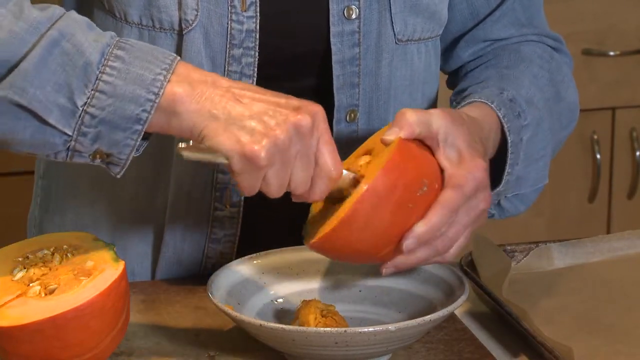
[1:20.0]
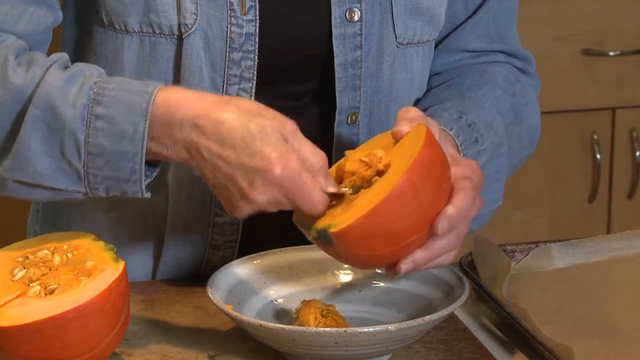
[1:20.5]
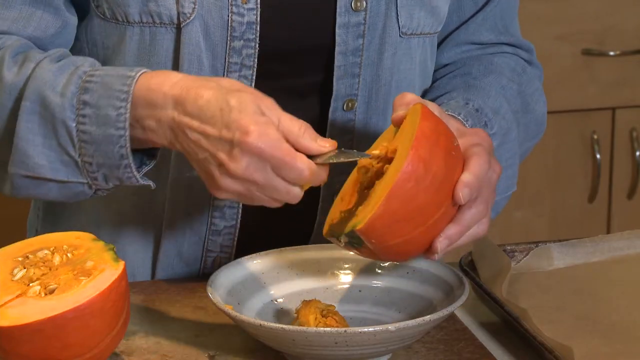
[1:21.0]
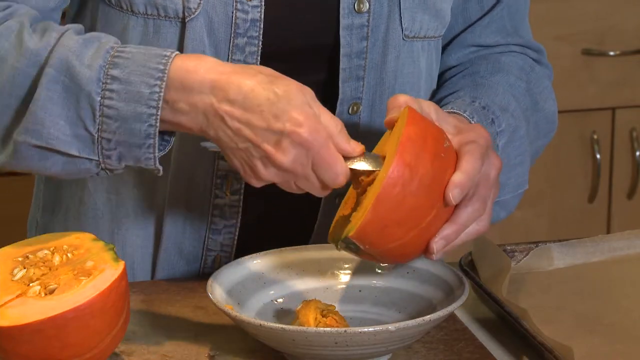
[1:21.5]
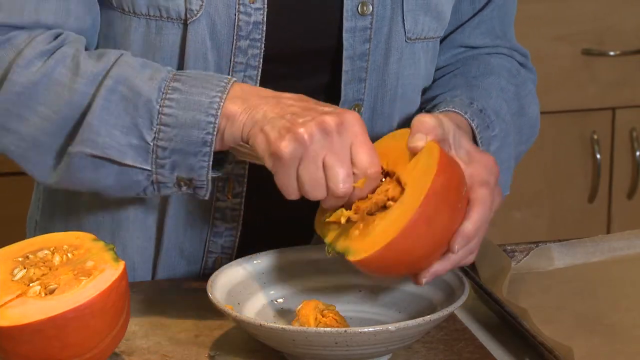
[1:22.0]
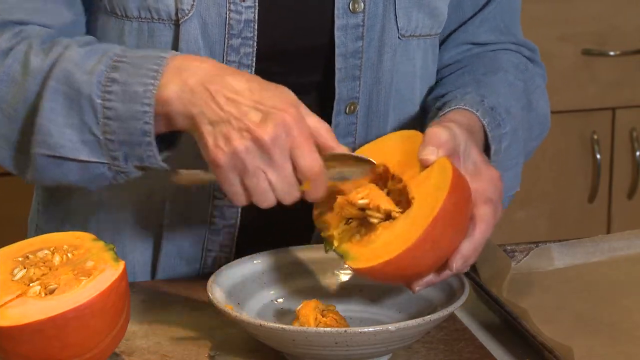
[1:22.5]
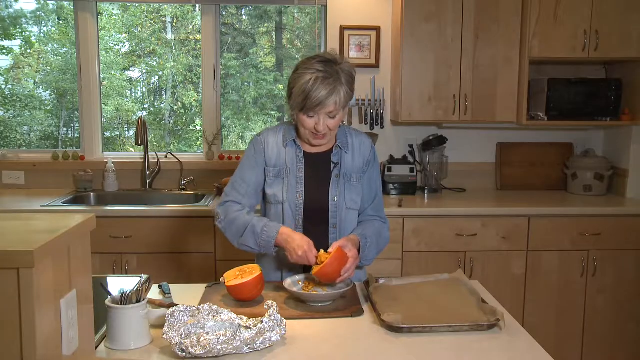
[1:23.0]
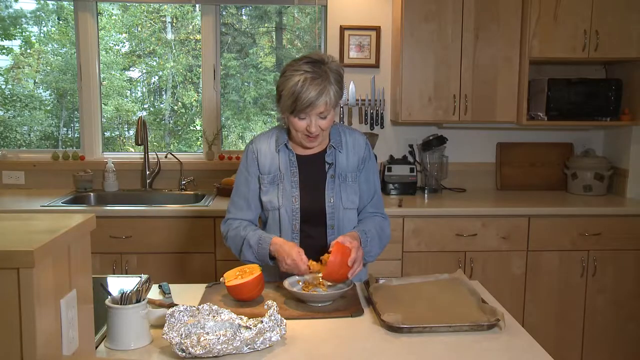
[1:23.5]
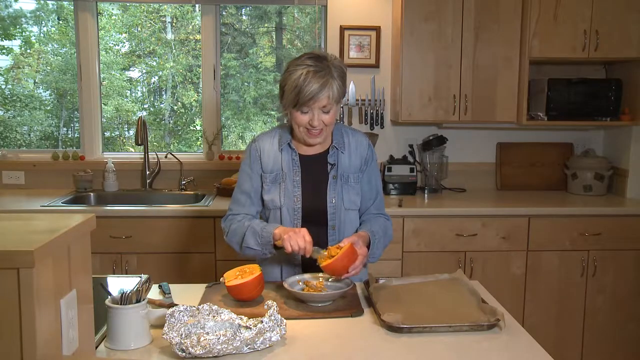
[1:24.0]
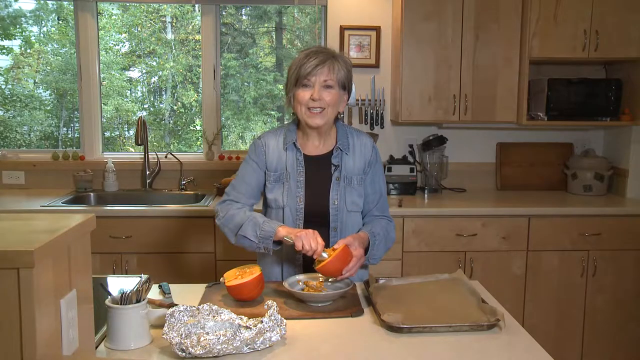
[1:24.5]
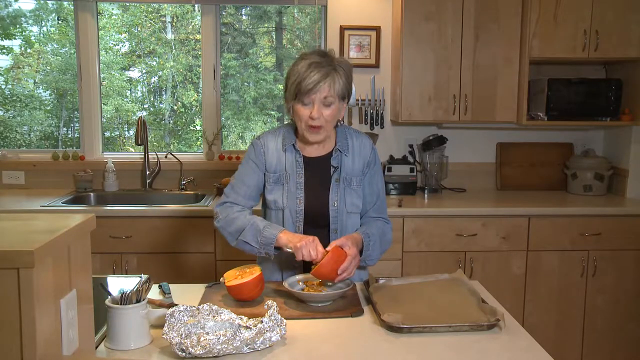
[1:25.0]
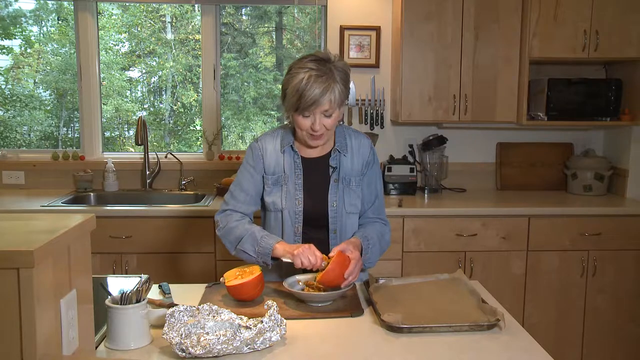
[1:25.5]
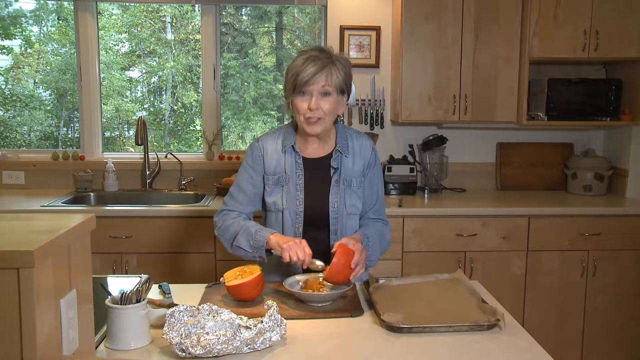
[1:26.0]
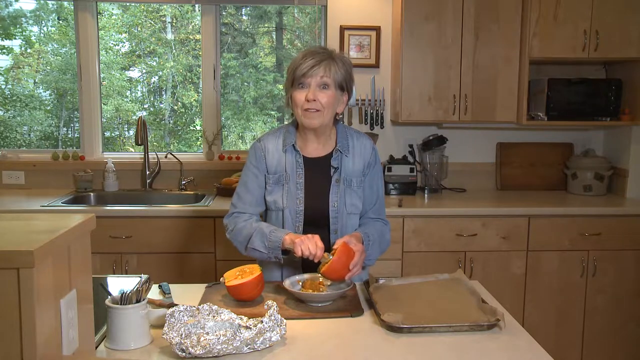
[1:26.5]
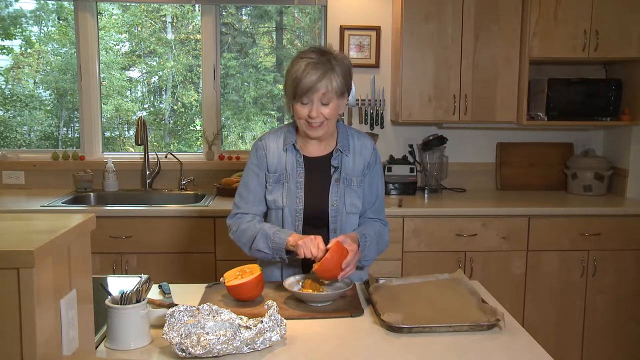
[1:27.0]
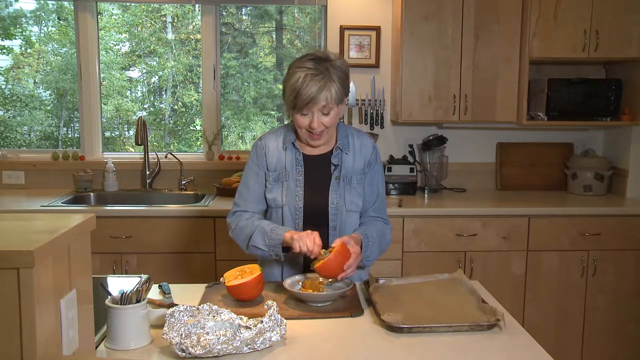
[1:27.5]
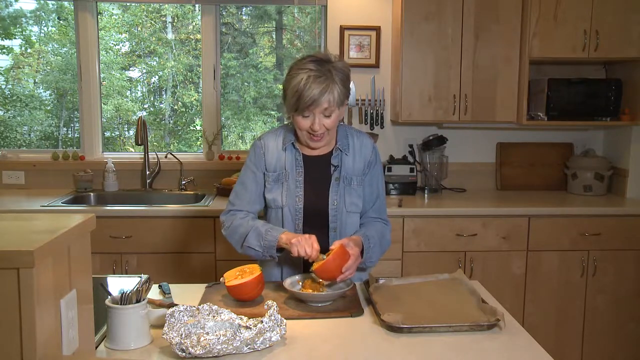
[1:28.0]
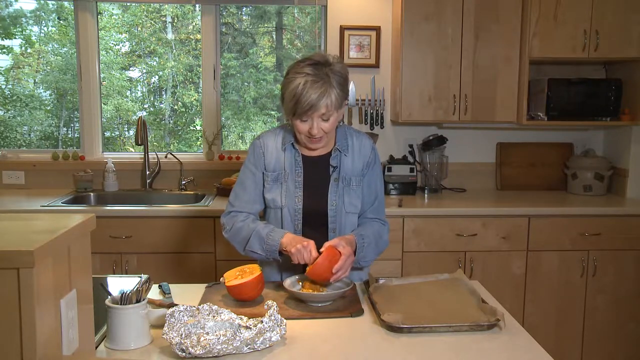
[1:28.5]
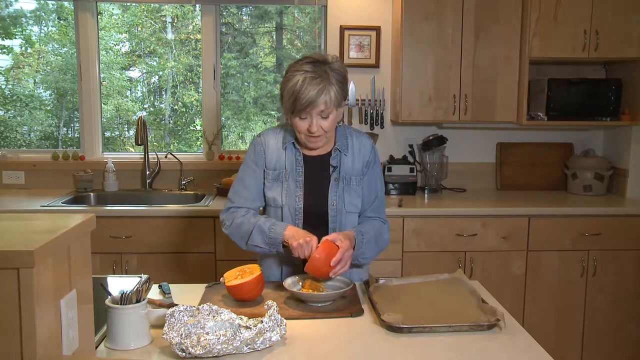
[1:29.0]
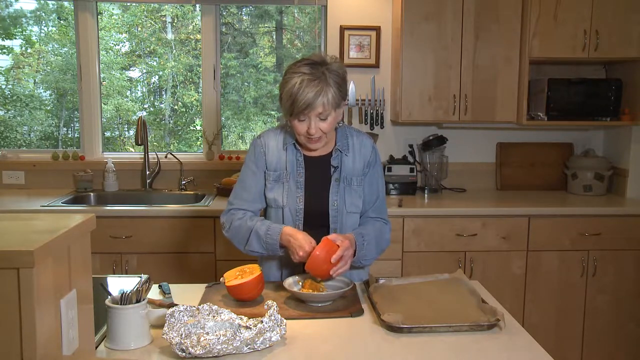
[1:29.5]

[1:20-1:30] The woman is still taking the seeds out of one half of the pumpkin, gripping it firmly with her left hand, her muscles stiff-looking. With her right hand she has a good grip on the spoon, holding it near the tip so she can make a circular scooping motion. The camera pans backward to show her entirely. She is talking as she works and seems to be having a good time. Next to her is the other half of the pumpkin, still holding a bunch of seeds and sitting upward, the last half to be worked on. The knife is sitting almost in the same spot it was before, and the pastry brush is still present. The foil is next to the white jar, which has some other unidentified objects in it.